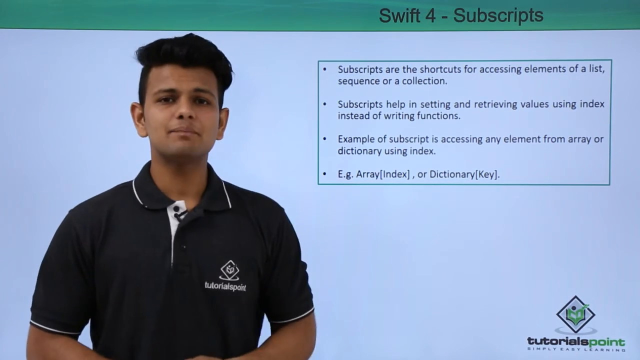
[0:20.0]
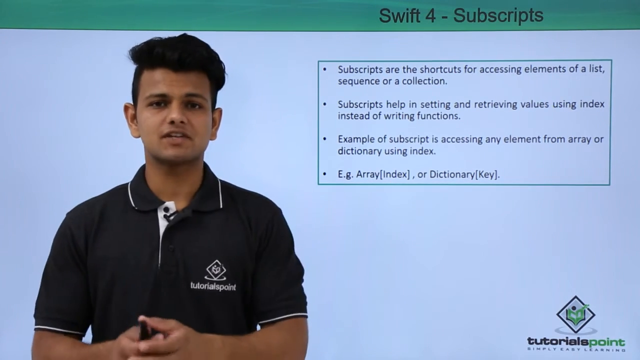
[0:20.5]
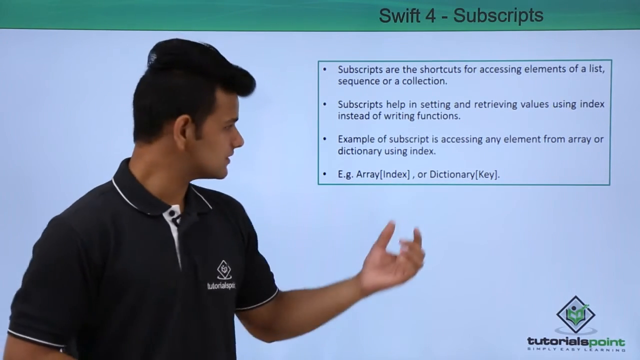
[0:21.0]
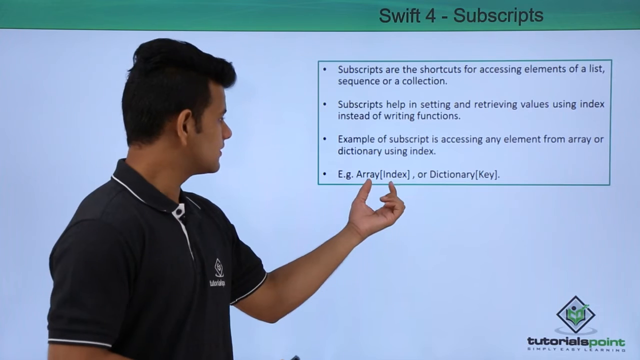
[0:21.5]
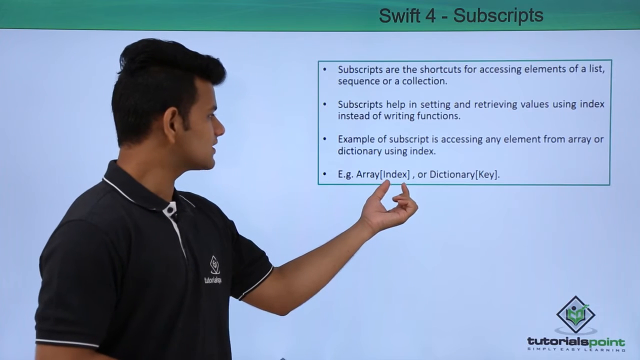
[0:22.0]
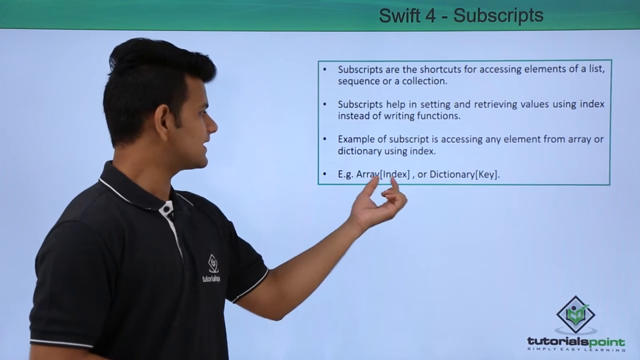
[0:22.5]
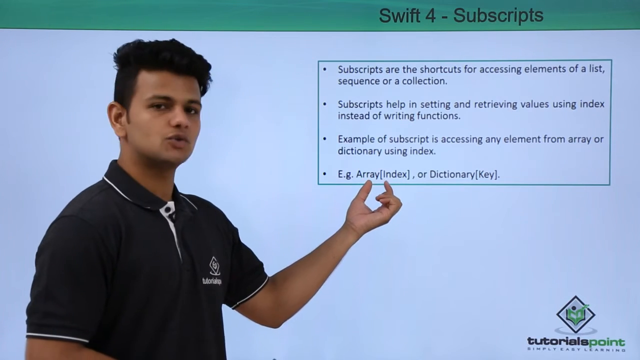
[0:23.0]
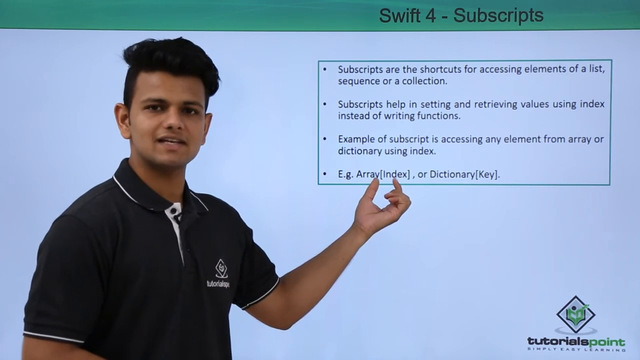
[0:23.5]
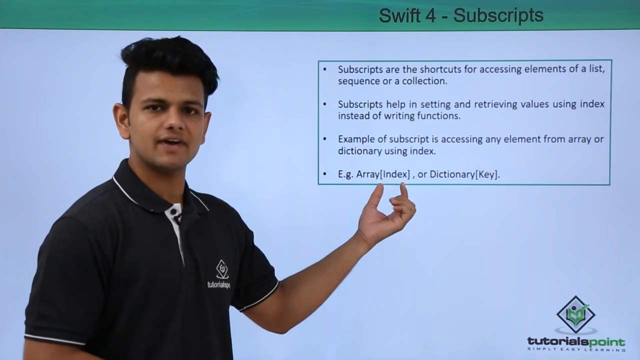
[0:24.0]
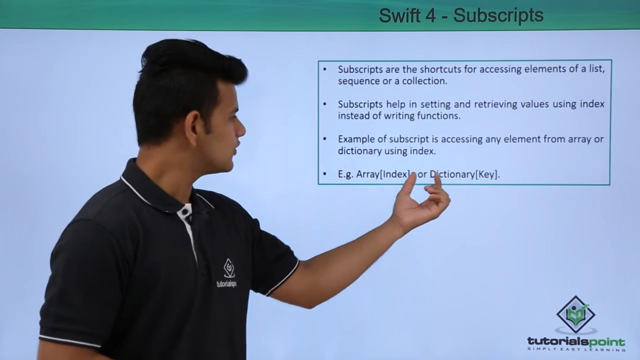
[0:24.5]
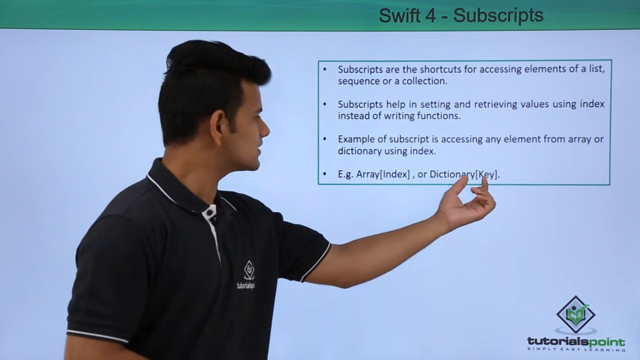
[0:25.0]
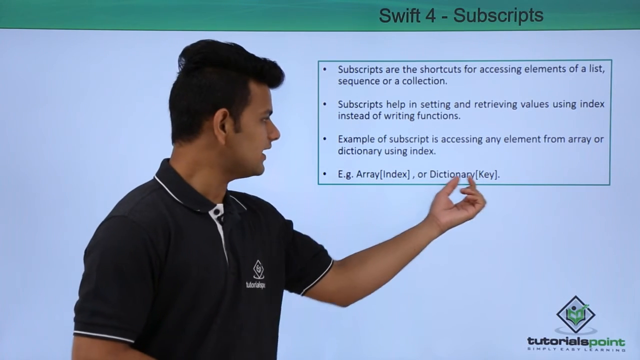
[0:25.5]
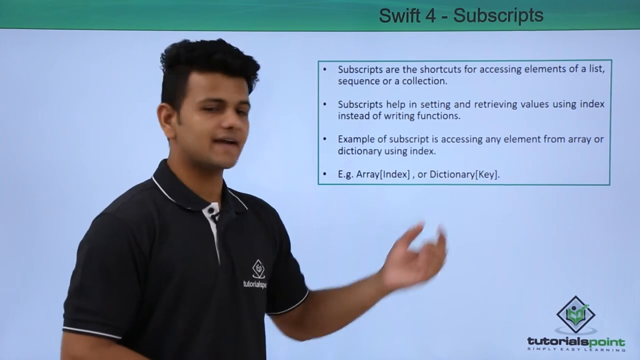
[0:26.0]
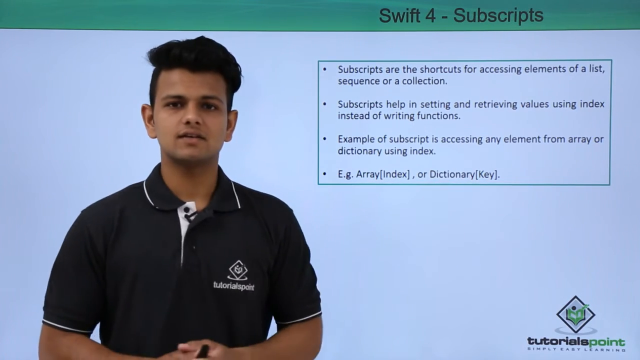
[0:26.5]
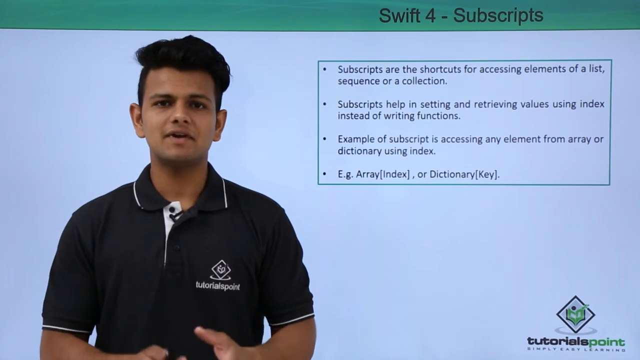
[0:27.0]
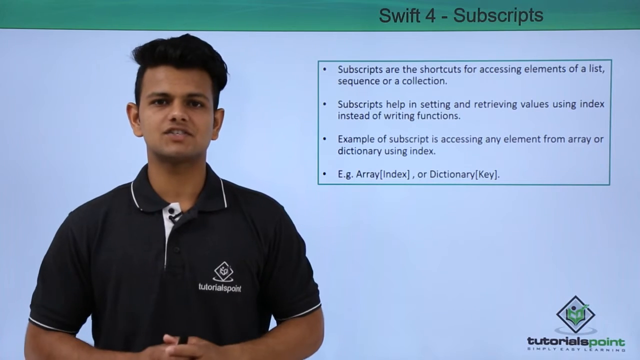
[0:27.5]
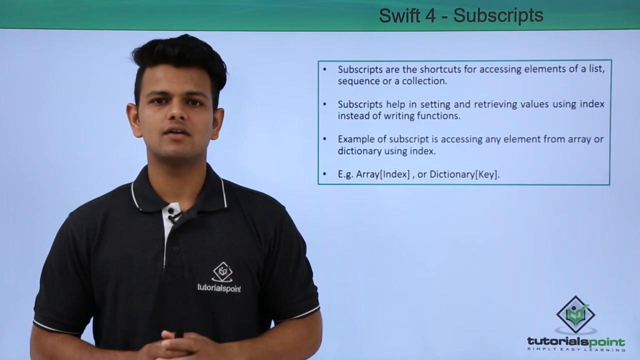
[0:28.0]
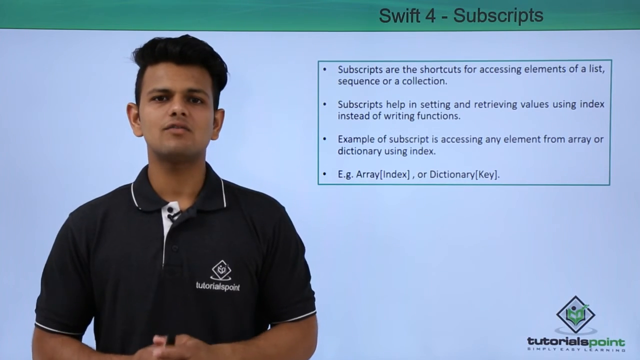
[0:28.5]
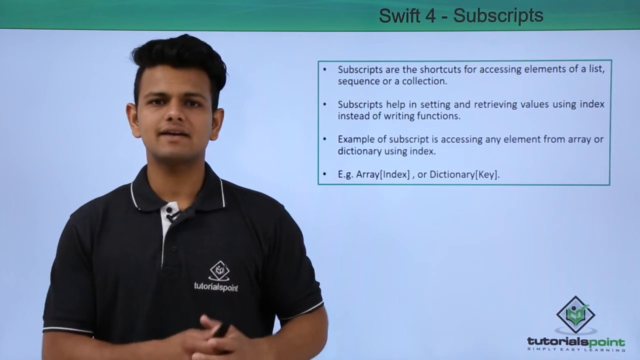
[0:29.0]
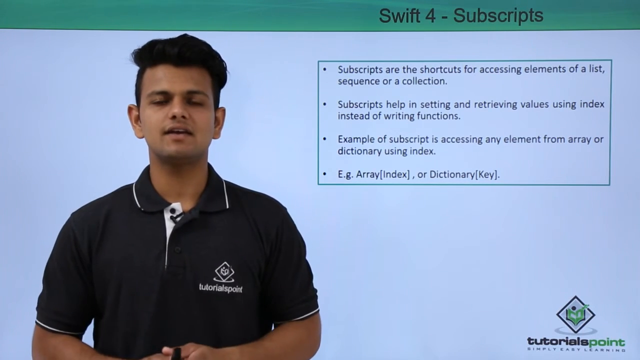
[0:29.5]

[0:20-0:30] The video returns to the man in the polo shirt, who continues on Swift 4 subscripts against a green background. The four points read: "subscripts are the shortcuts for accessing elements of a list, sequence, or a collection," "Subscripts help in setting and retrieving values using index instead of writing functions," and "Example of a subscript is accessing any element from array or dictionary using index," followed by two examples, "eg array index or dictionary key."